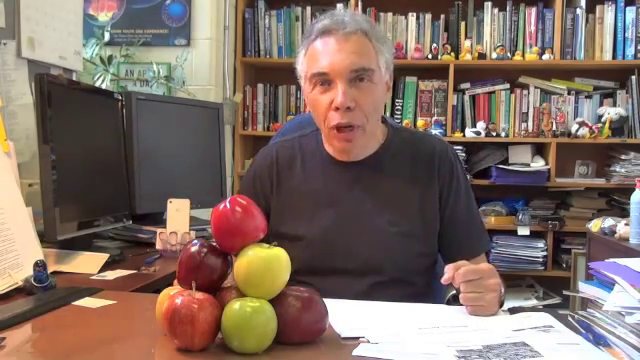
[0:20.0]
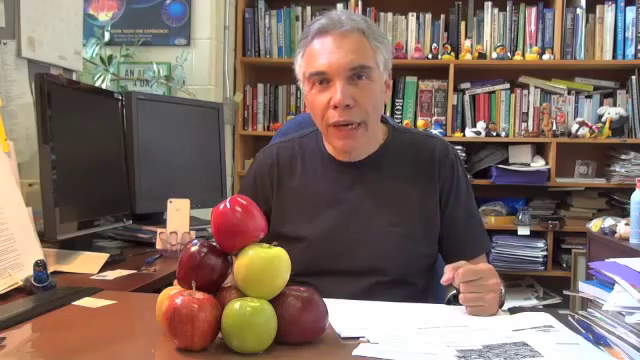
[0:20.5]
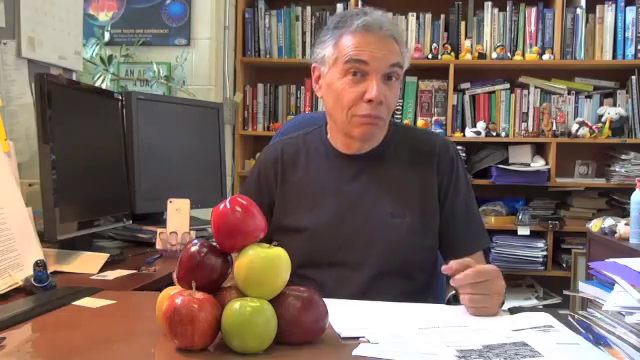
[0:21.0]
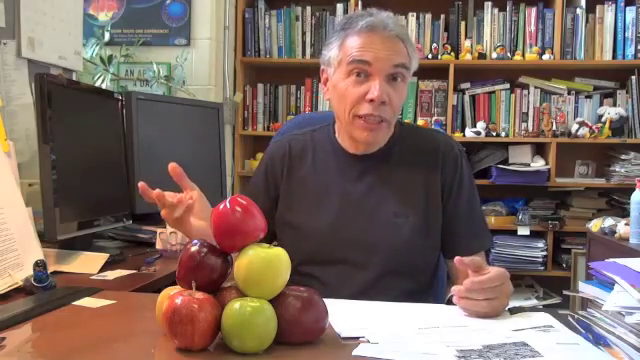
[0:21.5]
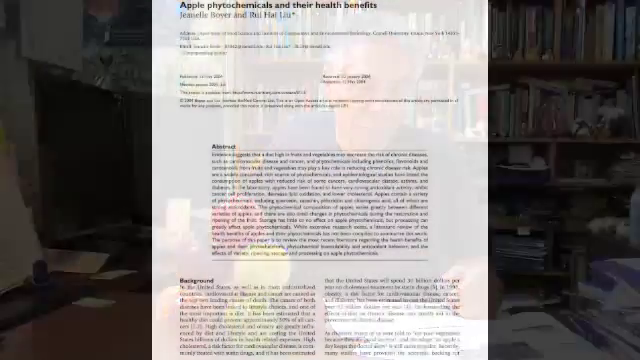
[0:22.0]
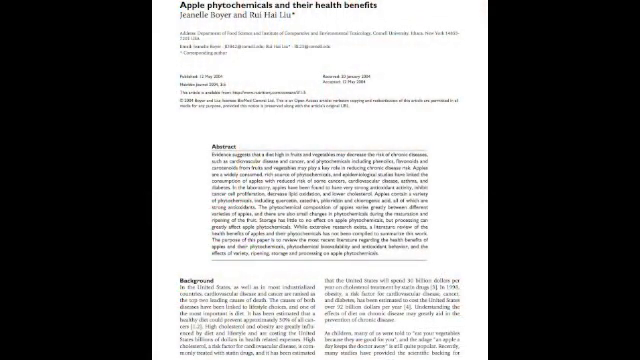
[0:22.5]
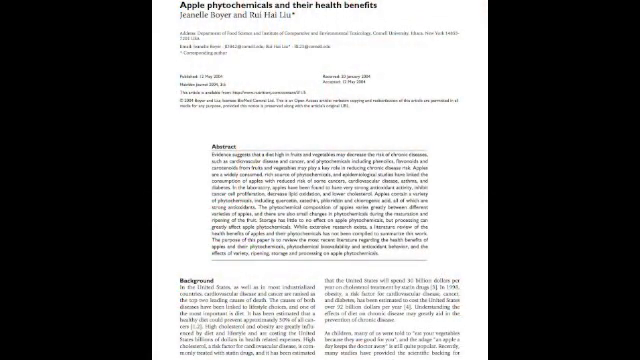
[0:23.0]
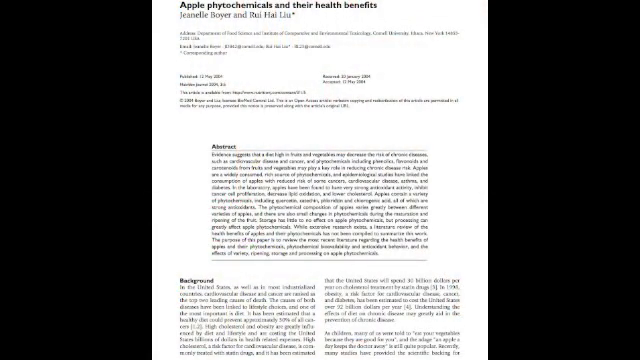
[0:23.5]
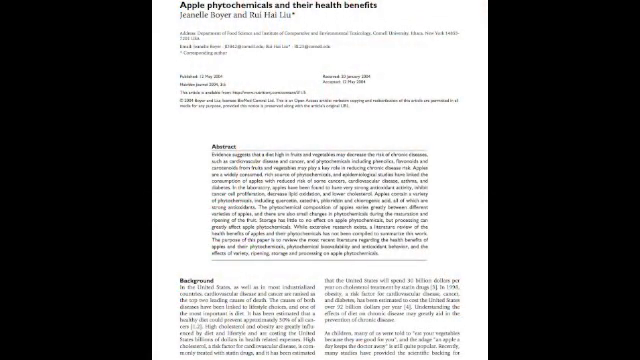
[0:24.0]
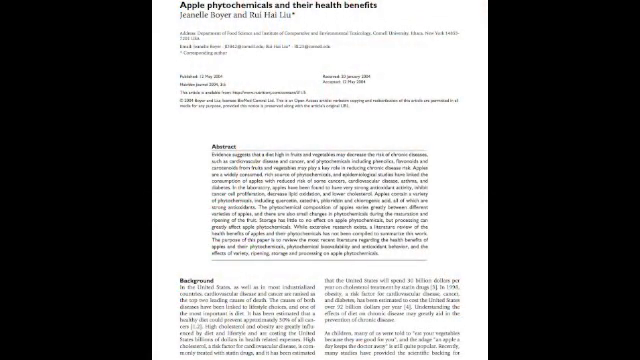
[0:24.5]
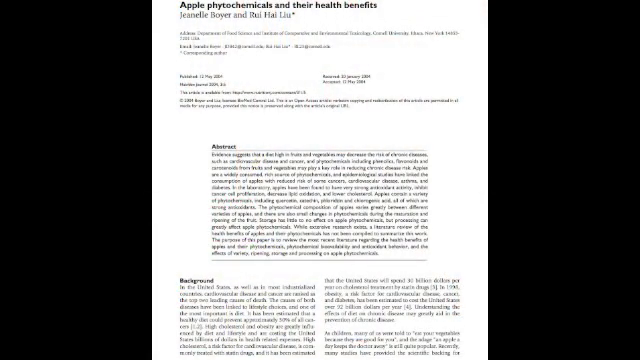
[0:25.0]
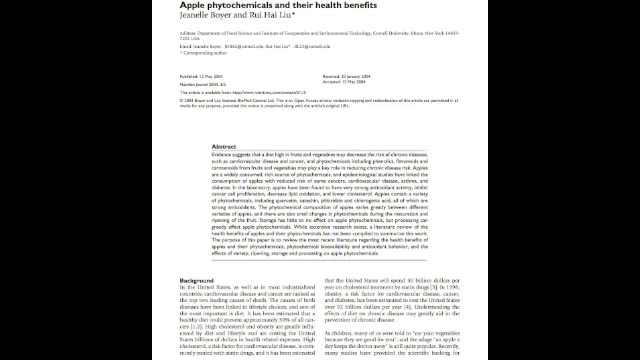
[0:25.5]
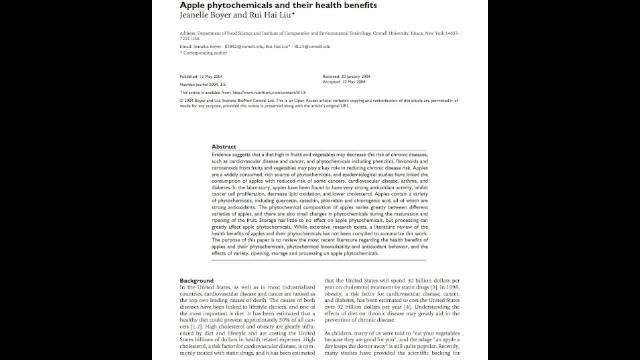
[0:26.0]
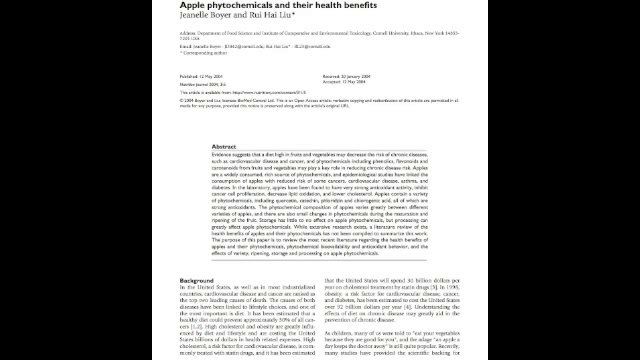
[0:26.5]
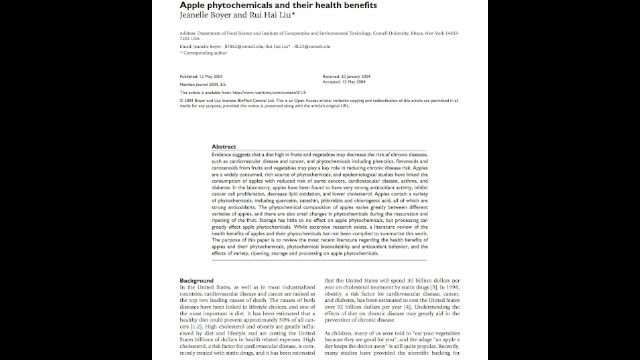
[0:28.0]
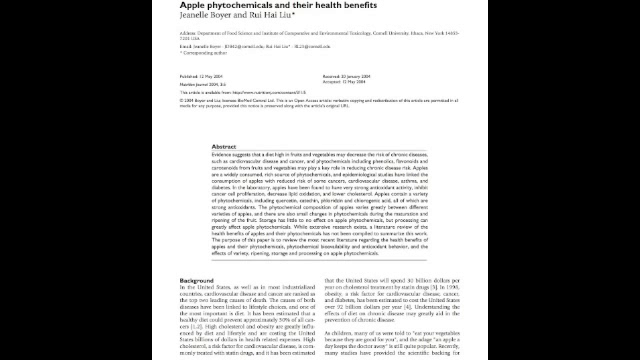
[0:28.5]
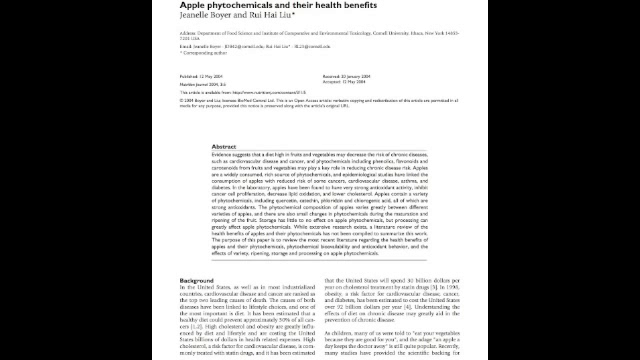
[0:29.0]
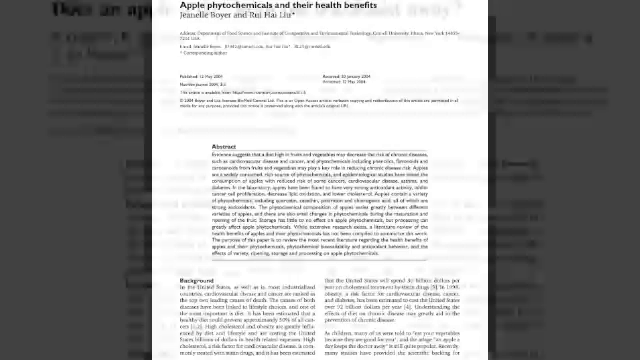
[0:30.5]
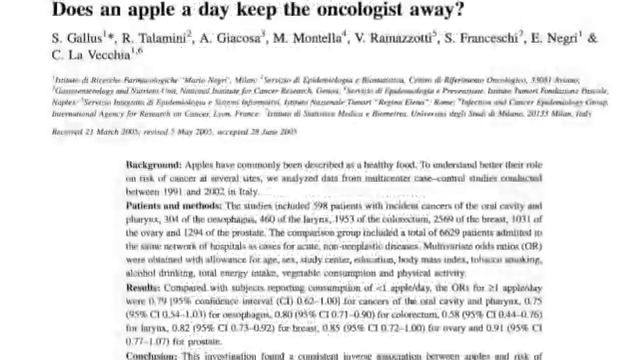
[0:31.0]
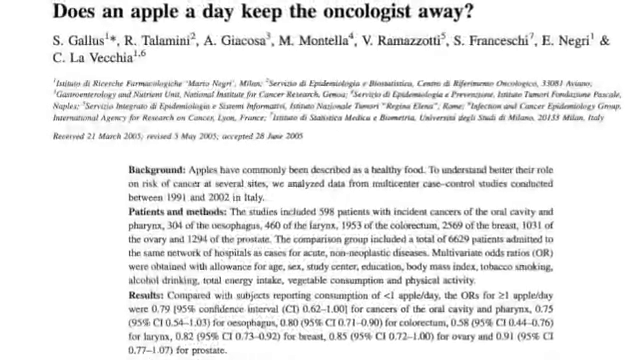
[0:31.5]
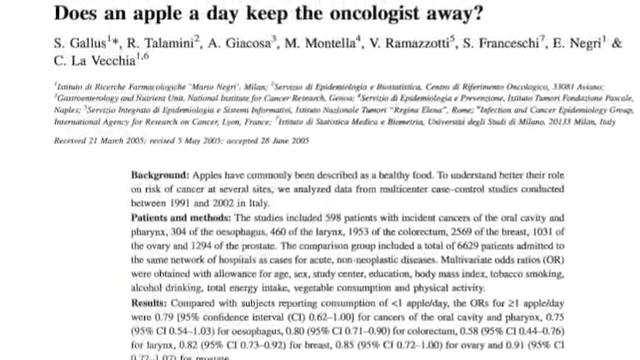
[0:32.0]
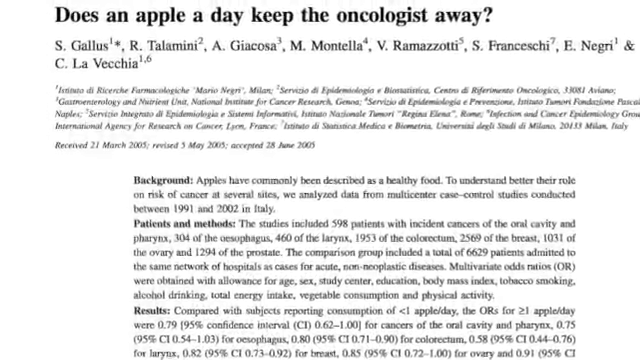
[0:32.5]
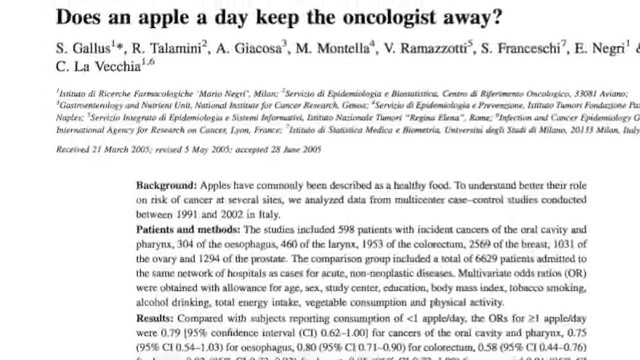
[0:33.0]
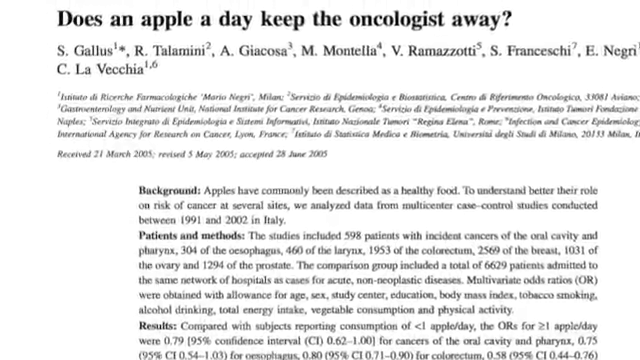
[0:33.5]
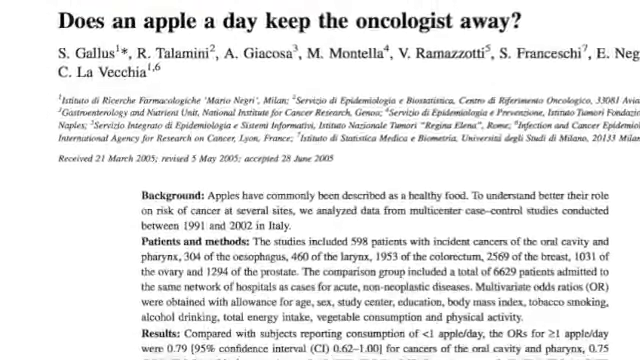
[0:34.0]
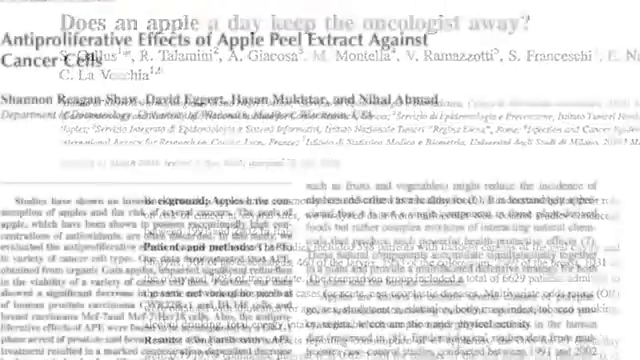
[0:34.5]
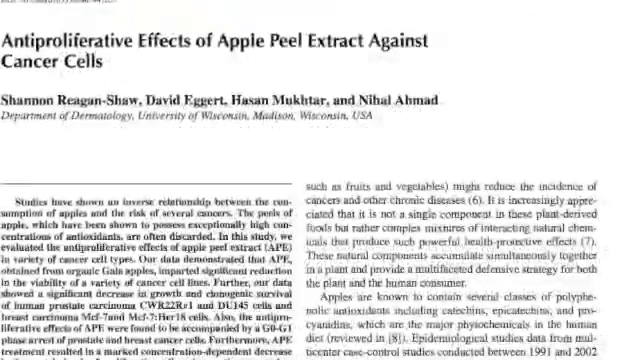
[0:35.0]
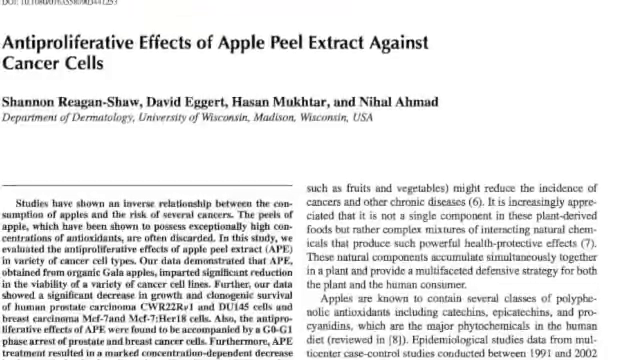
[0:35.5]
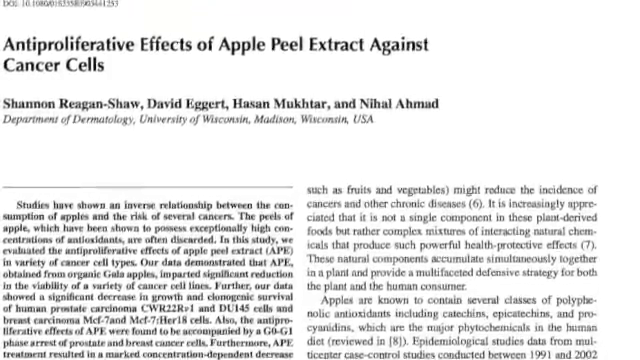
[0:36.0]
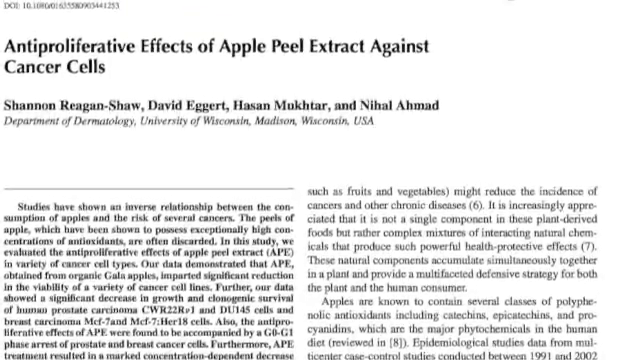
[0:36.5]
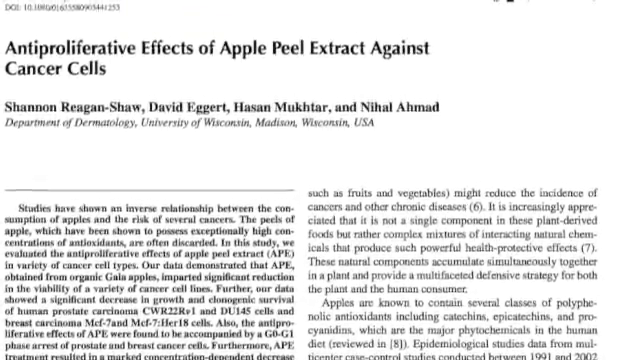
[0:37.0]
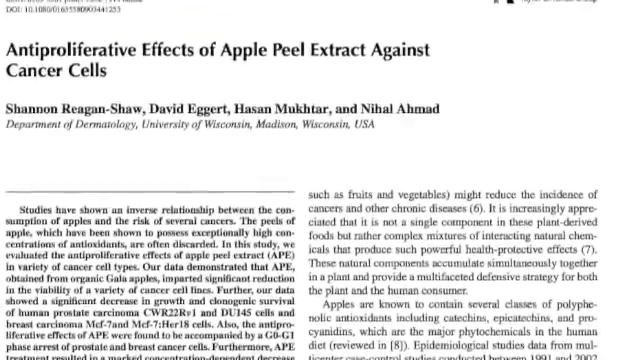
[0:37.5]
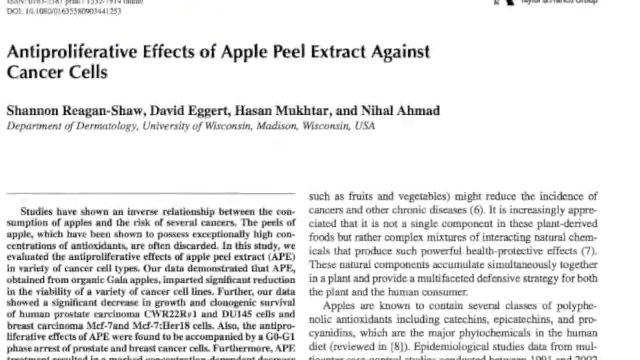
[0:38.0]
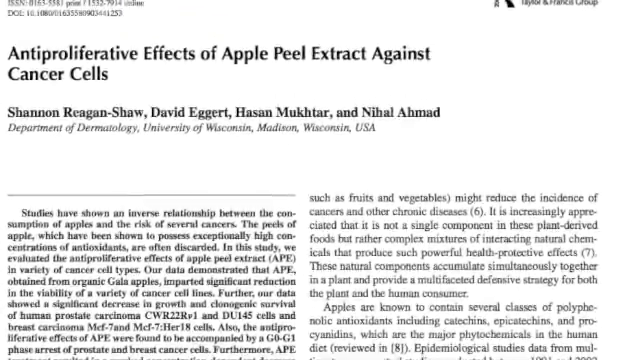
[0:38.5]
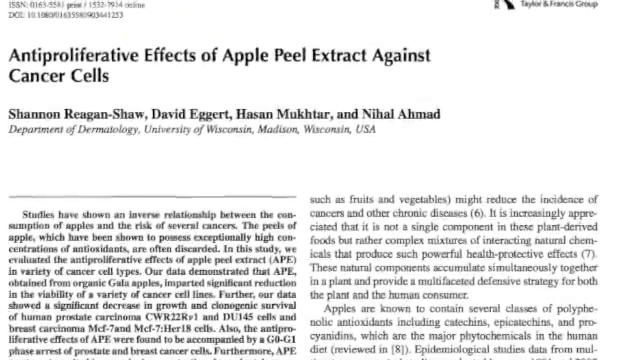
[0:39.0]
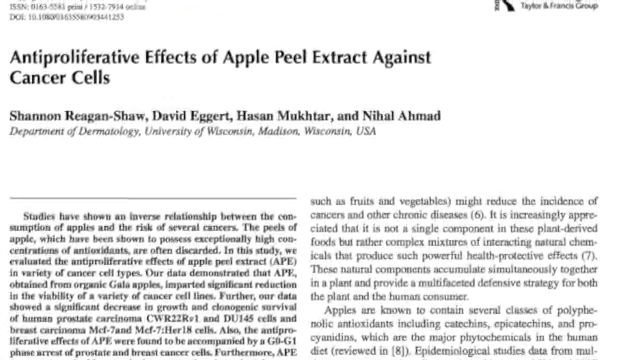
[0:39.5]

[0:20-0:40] A middle-aged man sits at a desk in an office space, speaking to the camera. Two computer monitors are to his right, and behind him is a bookshelf jammed full of books and other items. The desk in front of him holds a lot of papers, and the most notable object is a stack of red, green and yellow apples. The screen then transitions to an image of what looks like a research paper titled "Apple phytochemicals and their health benefits", and stays on it for a while. It then moves to another research paper titled "Does an apple a day keep the oncologist away?", with the authors and background information visible. Next comes a third research paper, "Antiproliferative effects of apple peel extracts against cancer cells", showing the author names and the very beginning of the paper, probably the abstract. Only the papers themselves are visible during this time.